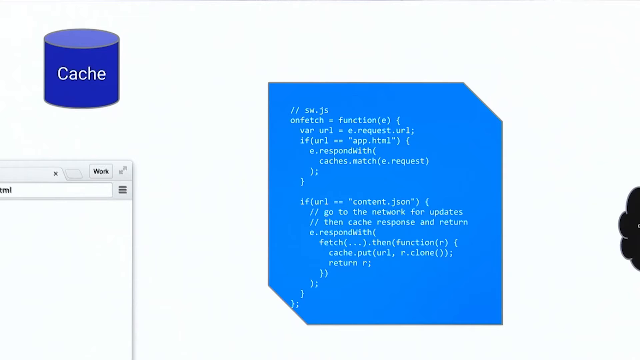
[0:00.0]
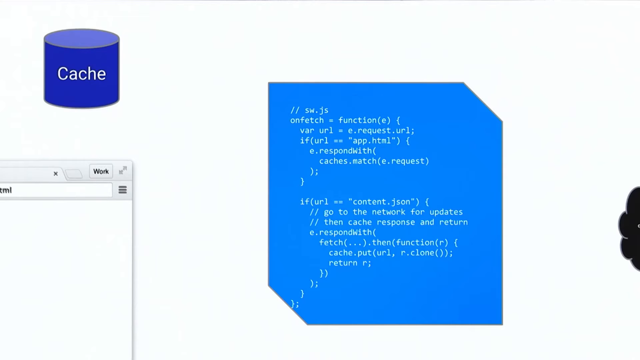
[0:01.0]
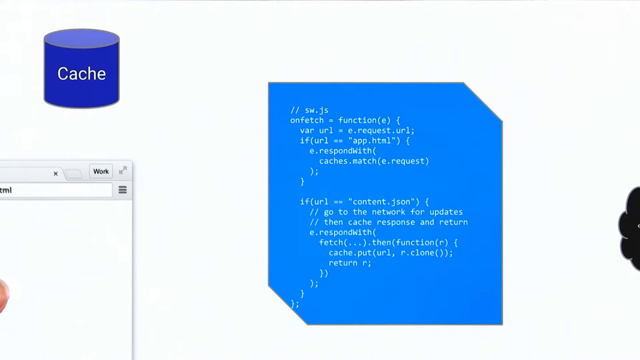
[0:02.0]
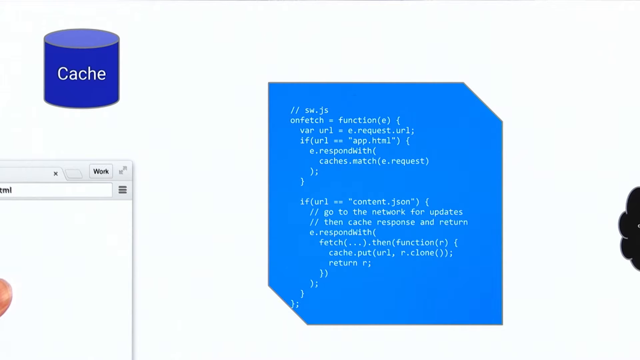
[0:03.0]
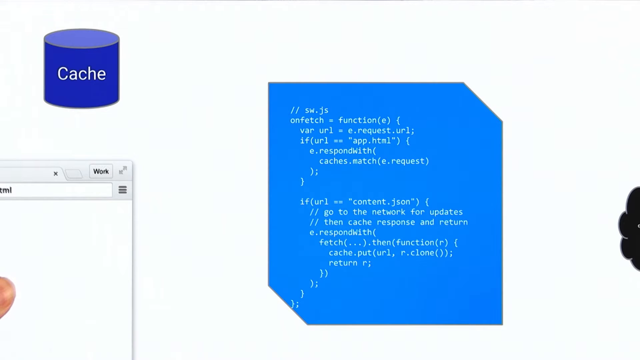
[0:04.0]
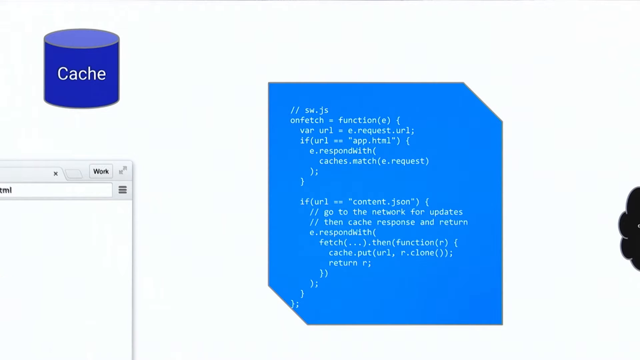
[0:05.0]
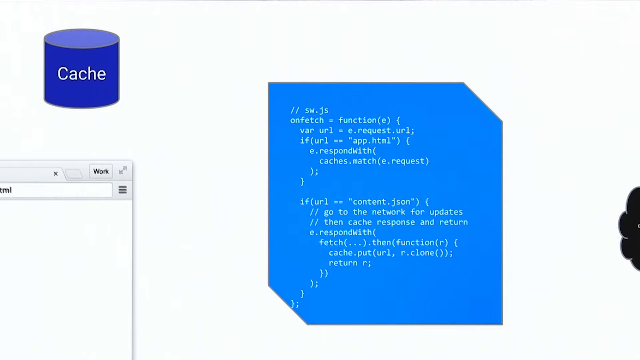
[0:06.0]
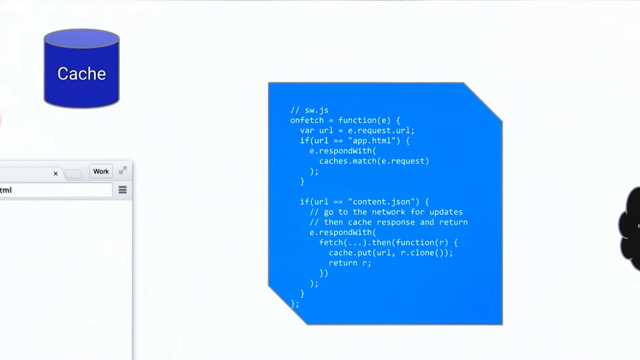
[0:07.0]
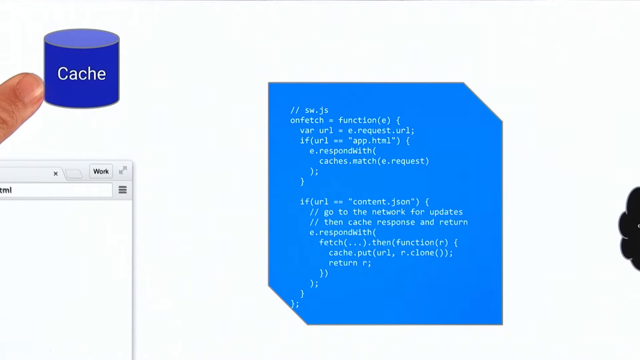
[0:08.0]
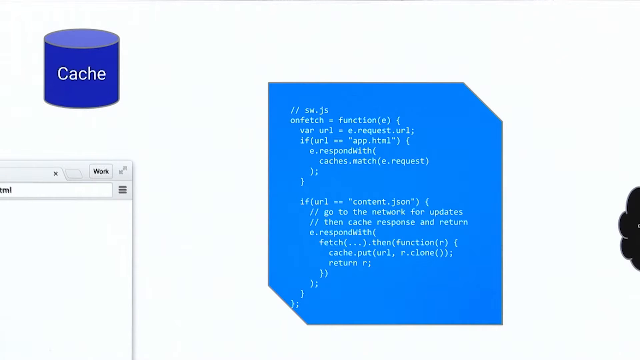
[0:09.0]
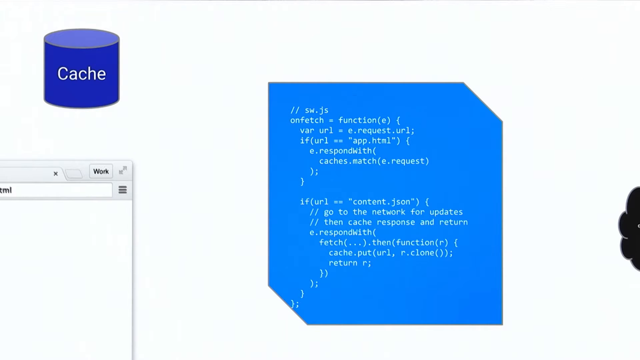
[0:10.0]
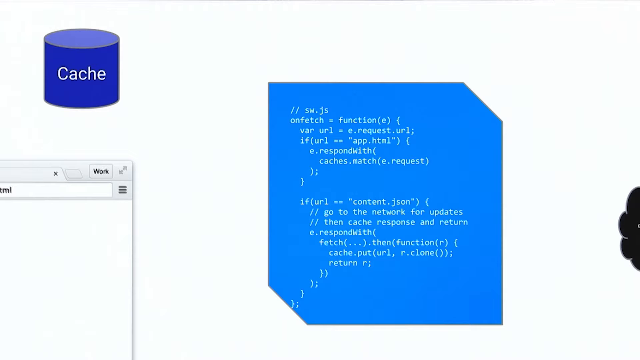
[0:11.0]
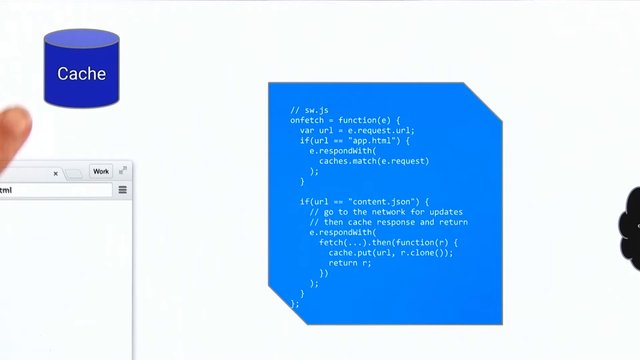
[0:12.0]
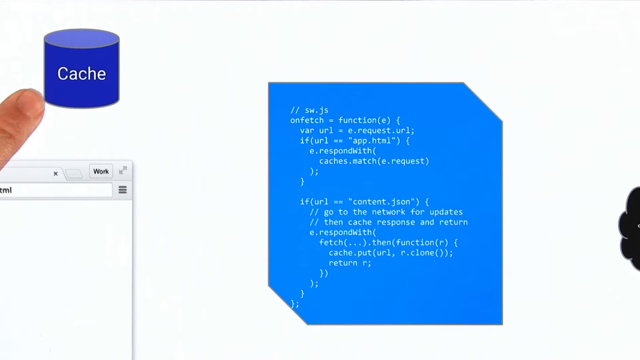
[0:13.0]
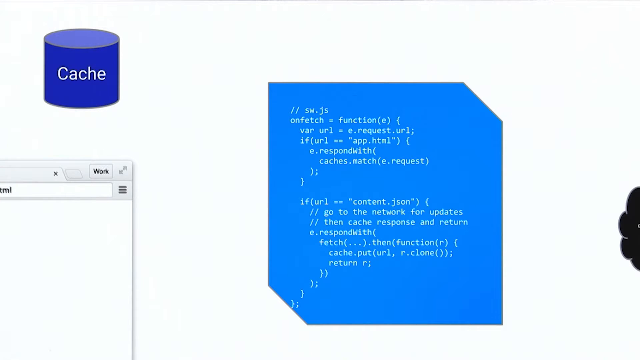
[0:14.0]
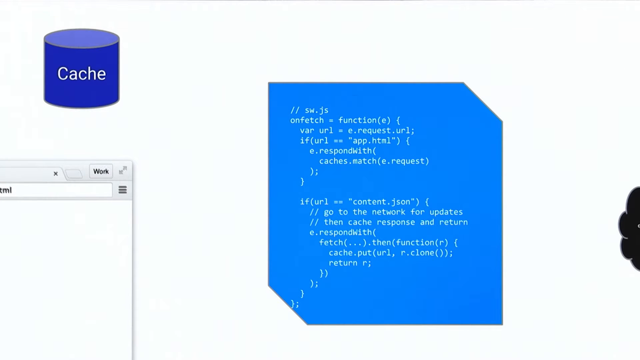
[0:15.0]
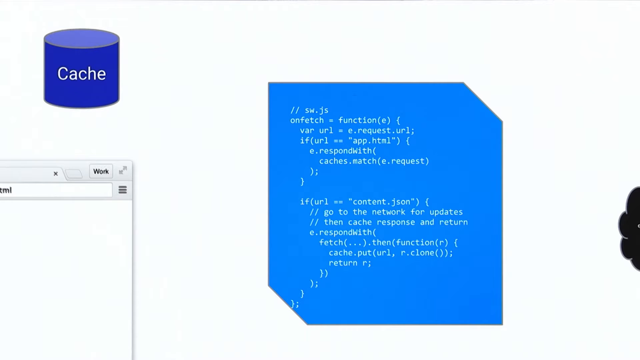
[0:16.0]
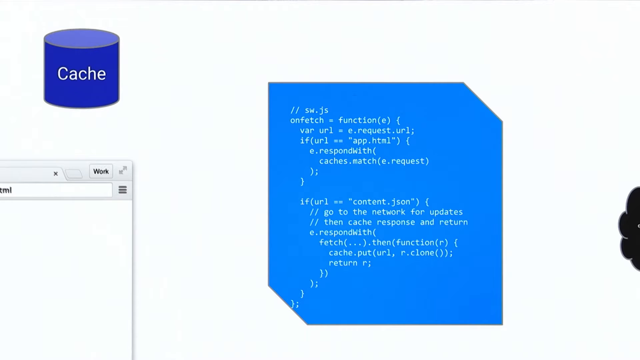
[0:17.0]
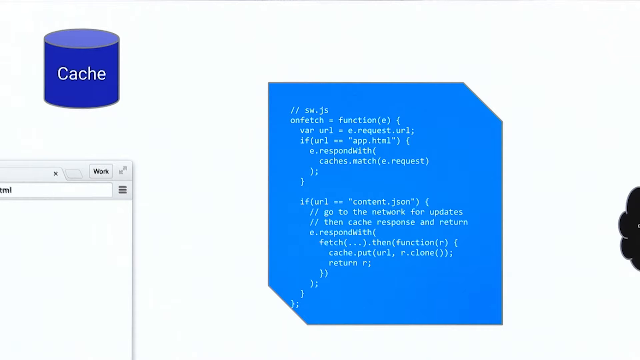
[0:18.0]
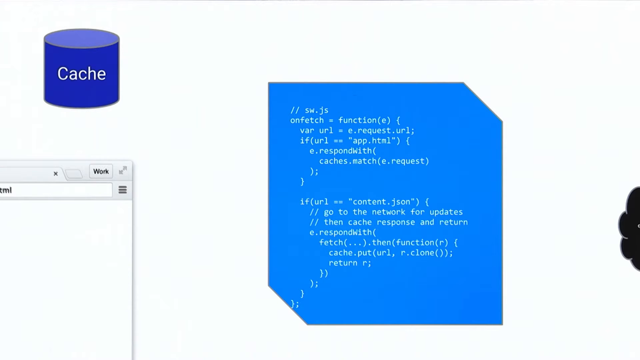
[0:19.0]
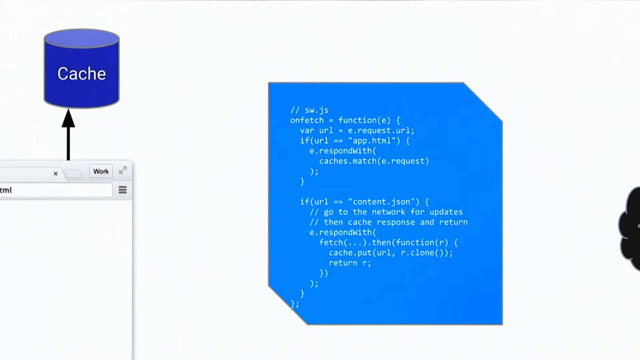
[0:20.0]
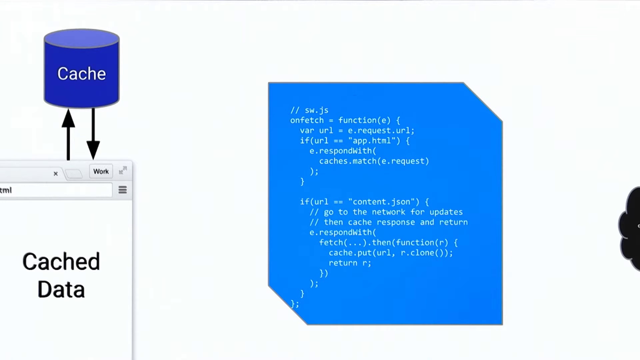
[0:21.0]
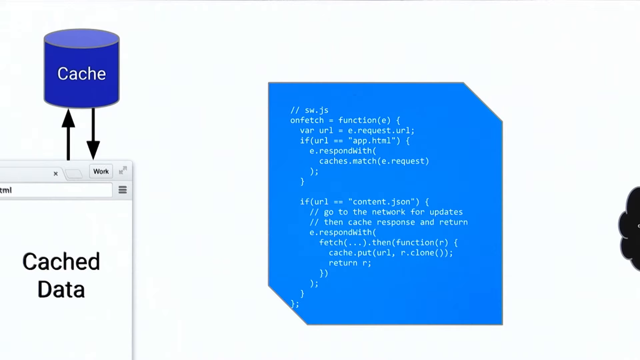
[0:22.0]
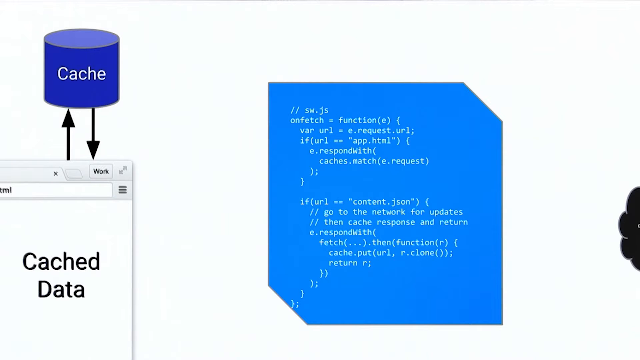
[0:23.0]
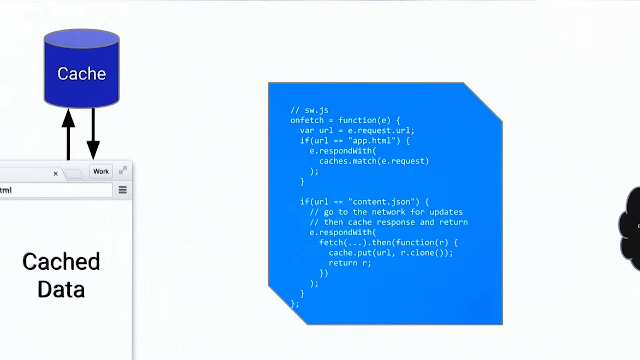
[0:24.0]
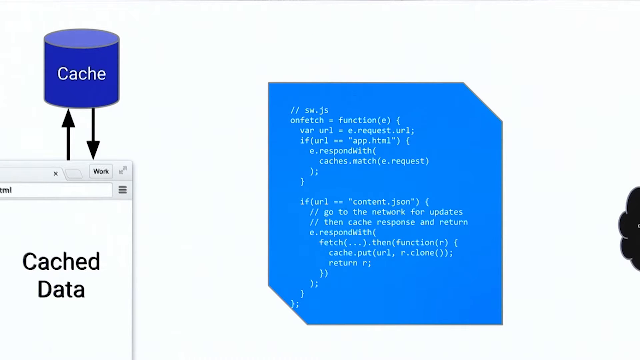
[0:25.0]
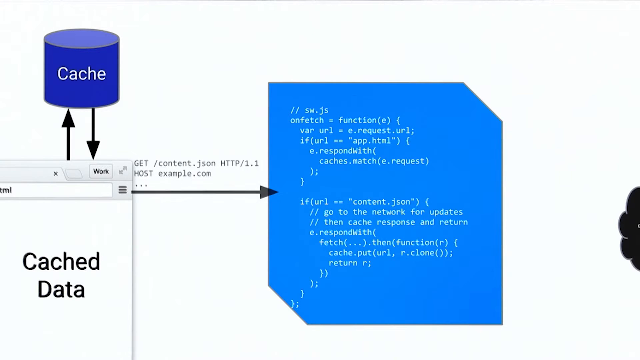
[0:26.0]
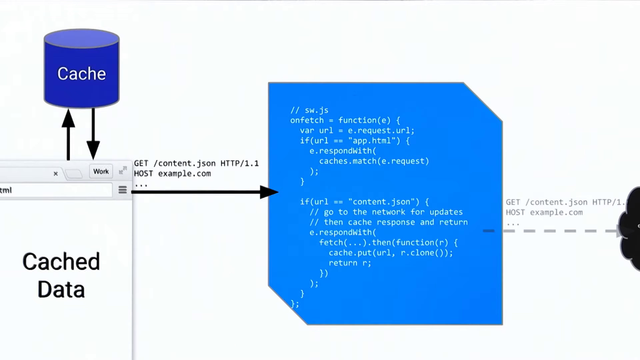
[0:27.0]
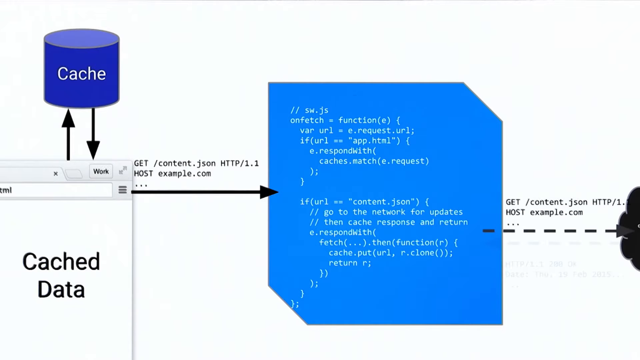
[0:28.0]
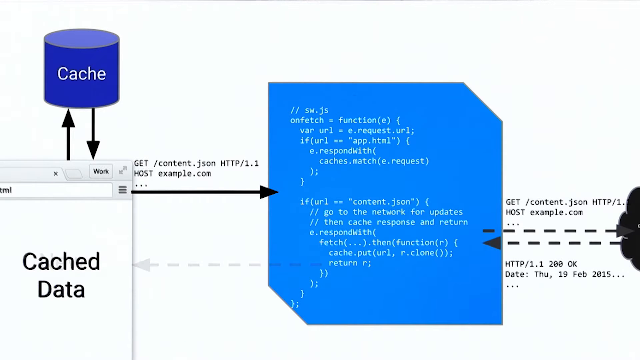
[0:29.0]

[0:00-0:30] Computer programming code, possibly Java or another programming language, appears on a shape almost like a rectangle with its edges cut off on two sides, in the middle of the frame. In the upper left-hand corner, a cylinder reads "cache". Someone's finger keeps appearing in the lower right-hand corner and upper left, pointing to the cache in the corner; only the tip of the finger is visible. A cache data box appears in the lower left-hand corner, with an arrow pointing to the cylinder labeled cache and an arrow pointing back, showing that they go together. Right at the end, solid lines point across from the new data, and a dotted line points back to the new data.